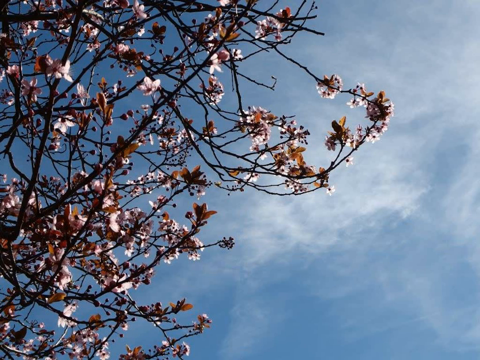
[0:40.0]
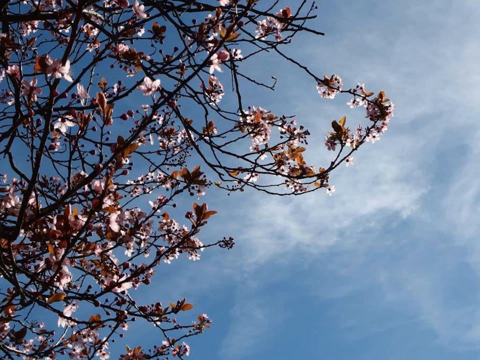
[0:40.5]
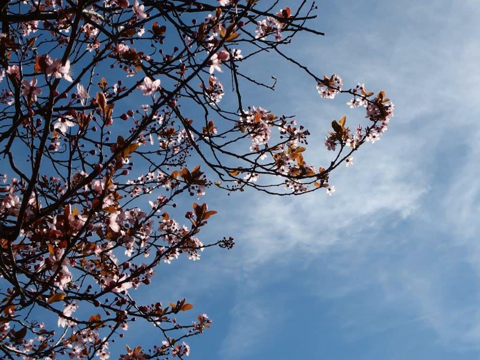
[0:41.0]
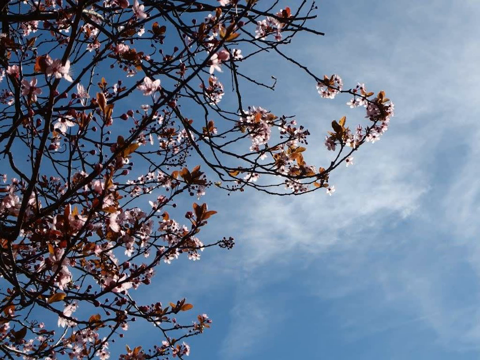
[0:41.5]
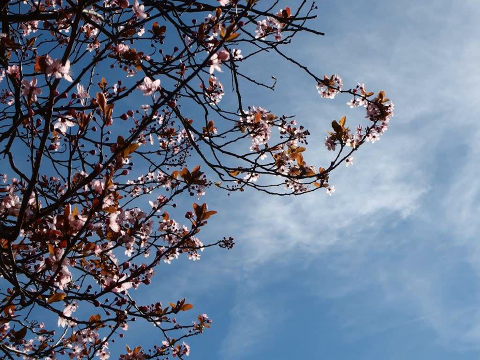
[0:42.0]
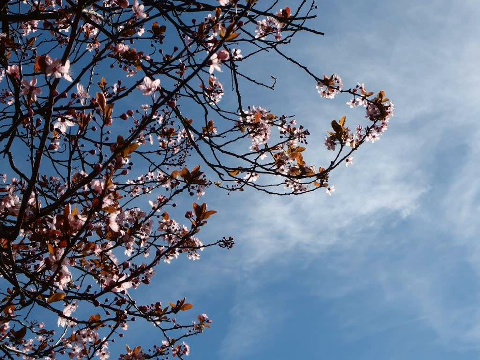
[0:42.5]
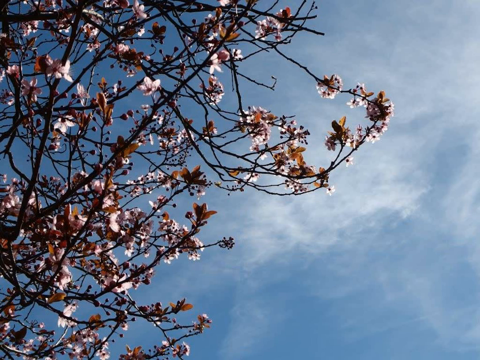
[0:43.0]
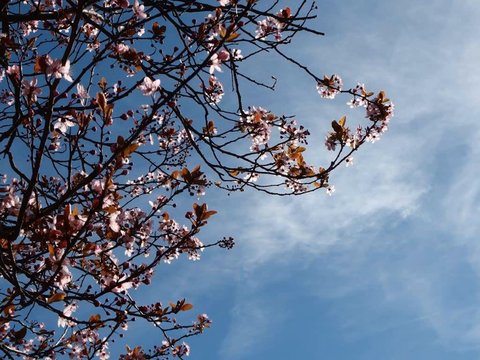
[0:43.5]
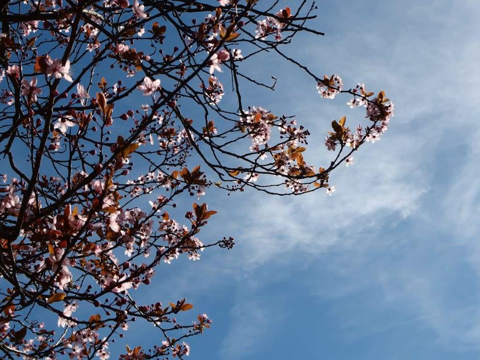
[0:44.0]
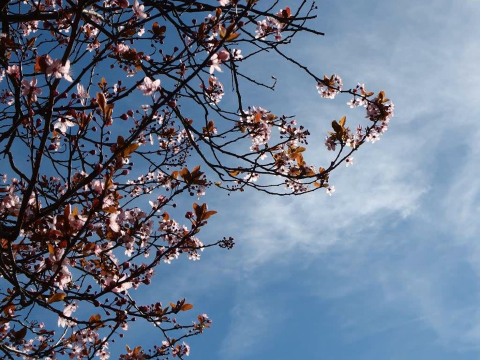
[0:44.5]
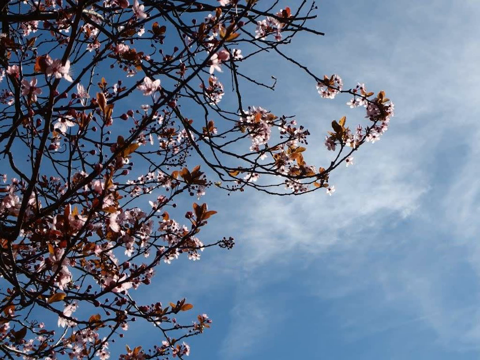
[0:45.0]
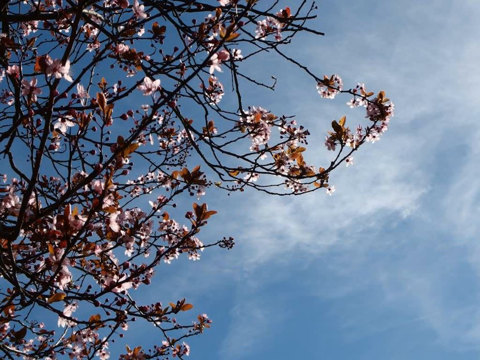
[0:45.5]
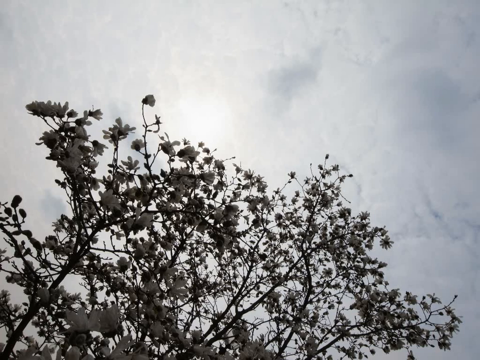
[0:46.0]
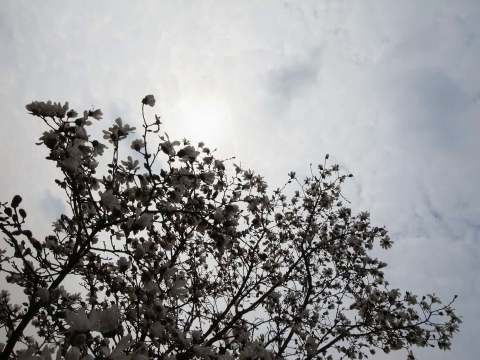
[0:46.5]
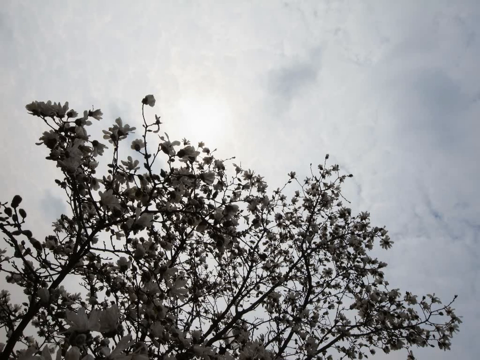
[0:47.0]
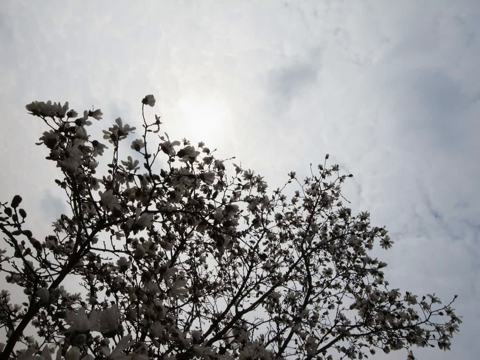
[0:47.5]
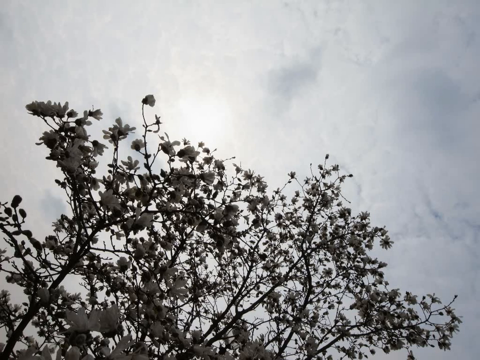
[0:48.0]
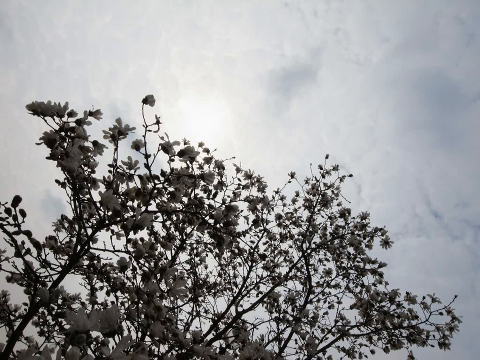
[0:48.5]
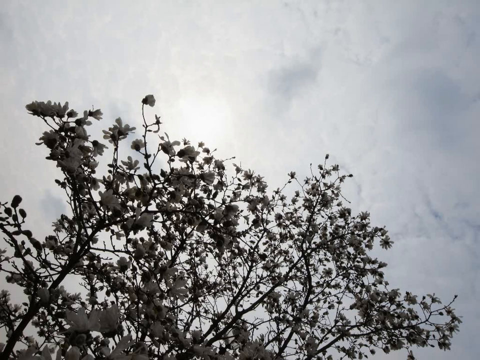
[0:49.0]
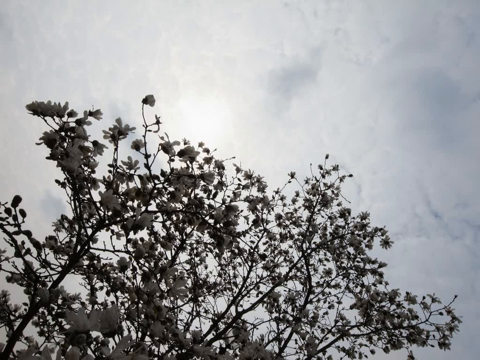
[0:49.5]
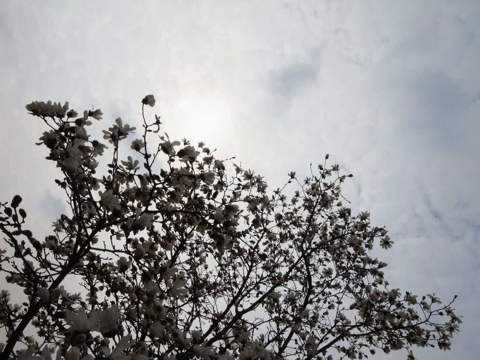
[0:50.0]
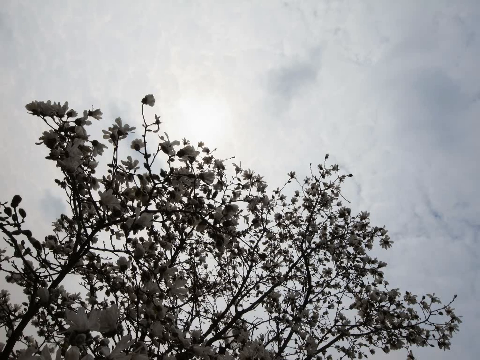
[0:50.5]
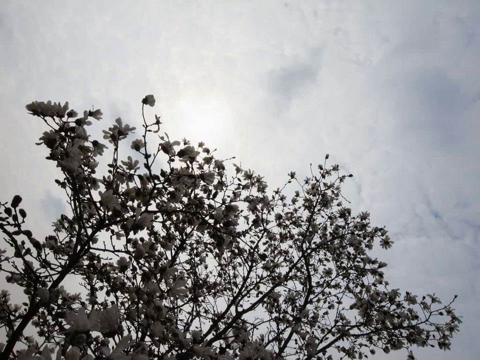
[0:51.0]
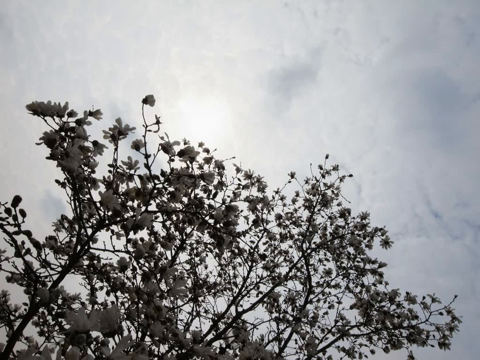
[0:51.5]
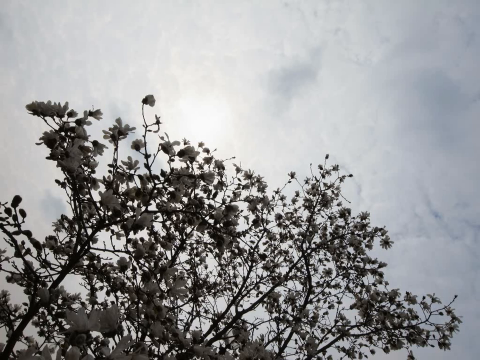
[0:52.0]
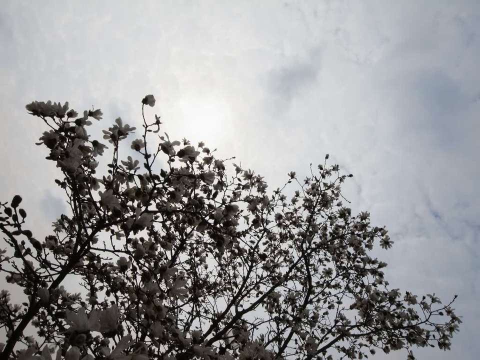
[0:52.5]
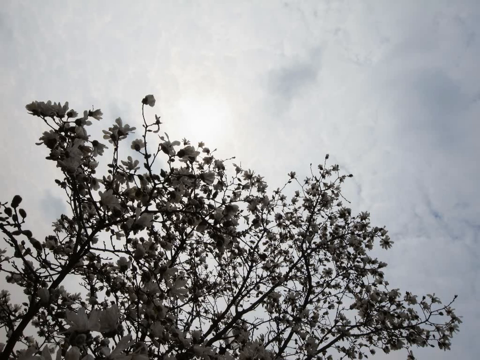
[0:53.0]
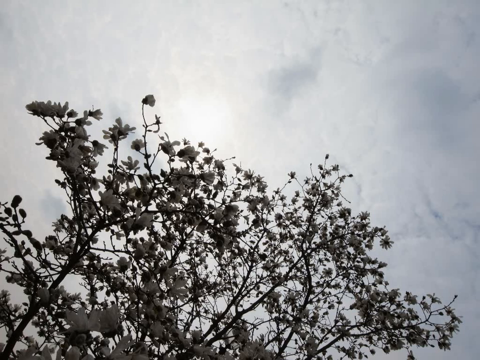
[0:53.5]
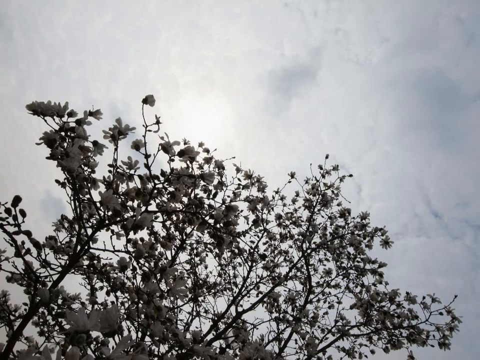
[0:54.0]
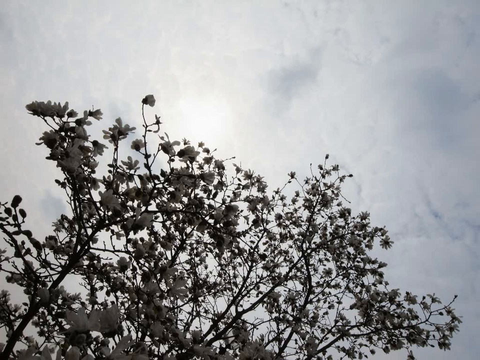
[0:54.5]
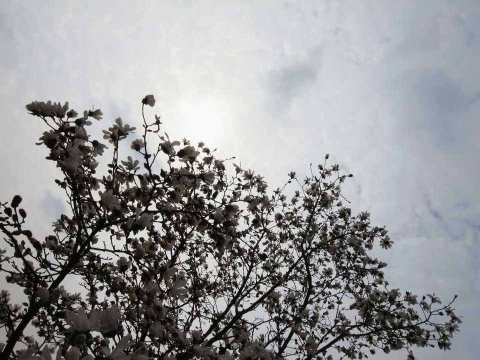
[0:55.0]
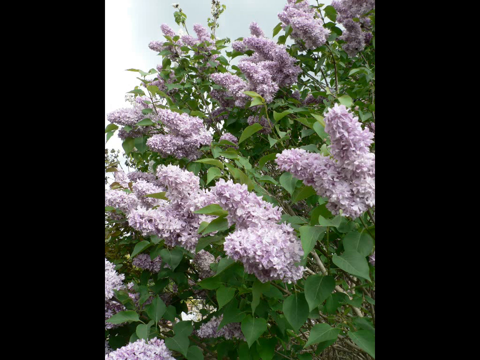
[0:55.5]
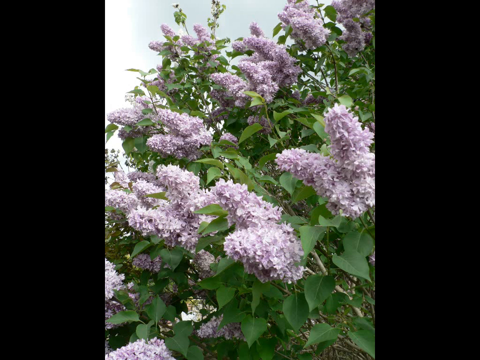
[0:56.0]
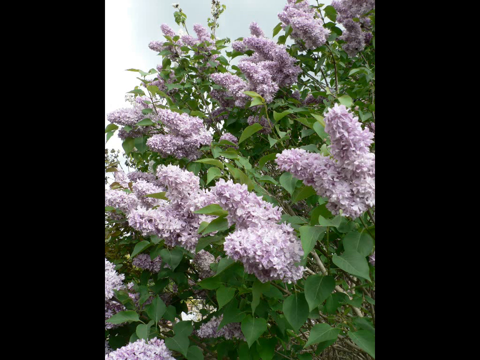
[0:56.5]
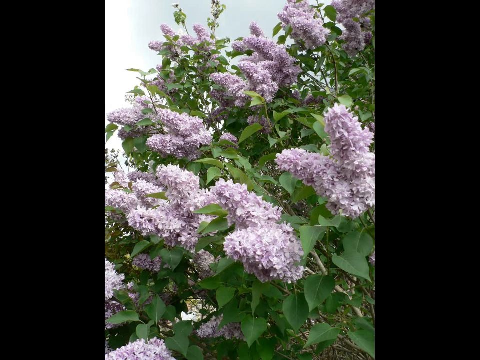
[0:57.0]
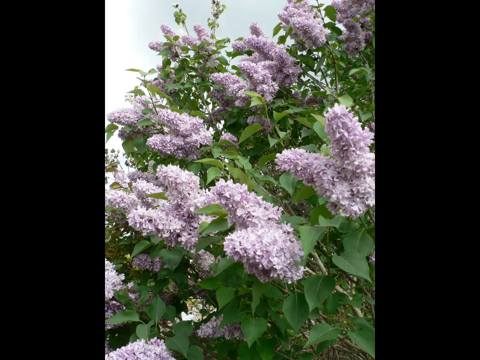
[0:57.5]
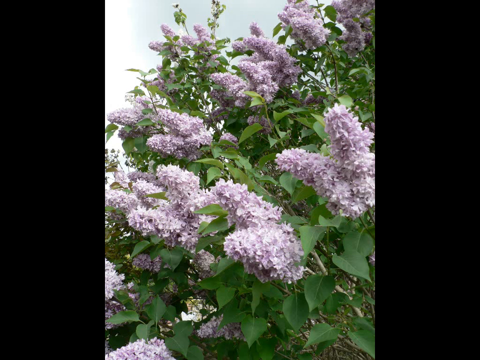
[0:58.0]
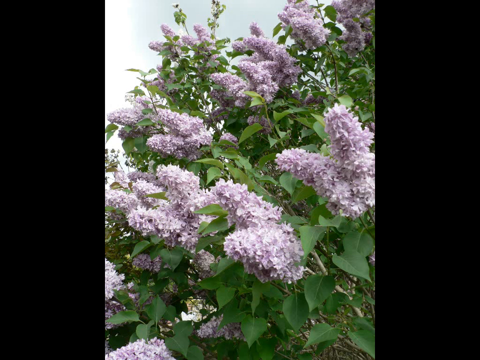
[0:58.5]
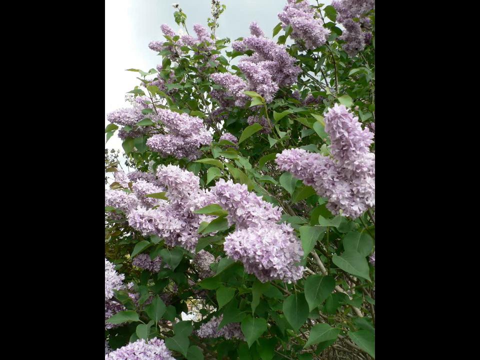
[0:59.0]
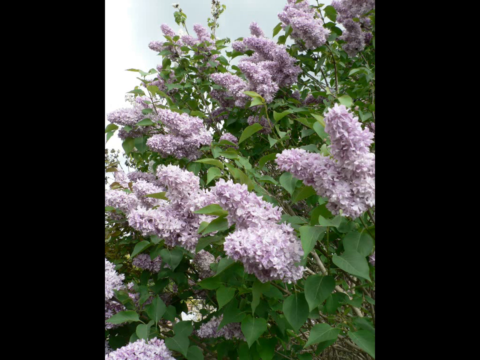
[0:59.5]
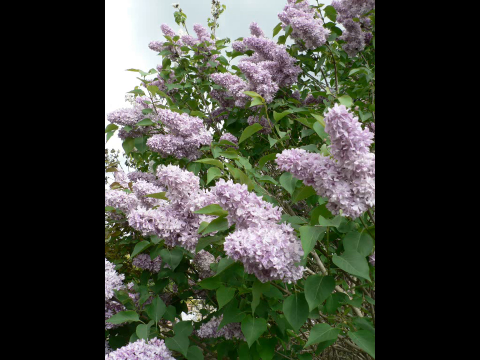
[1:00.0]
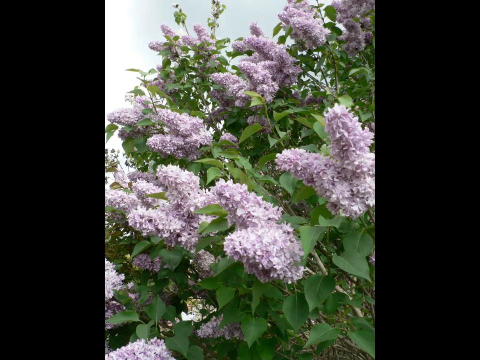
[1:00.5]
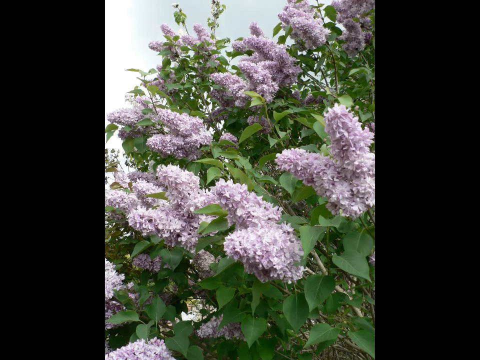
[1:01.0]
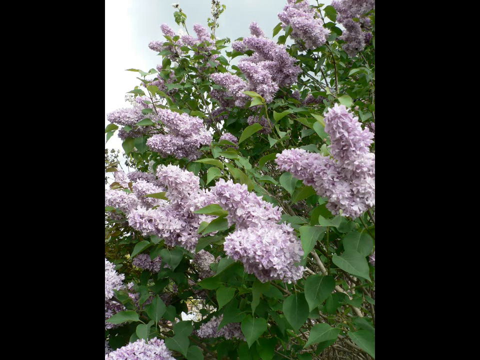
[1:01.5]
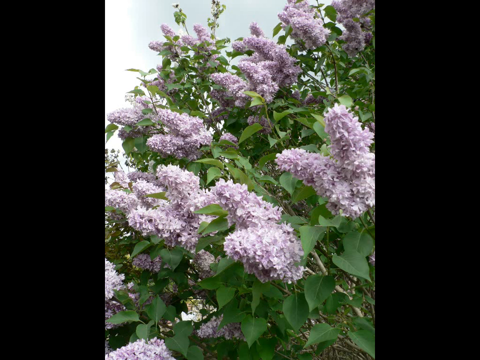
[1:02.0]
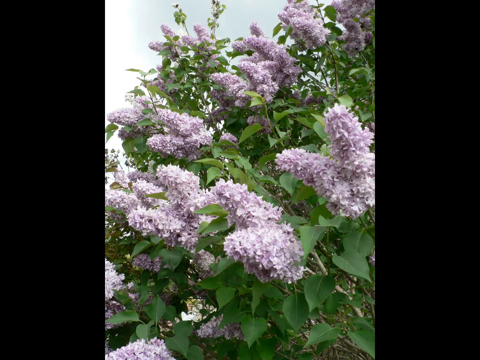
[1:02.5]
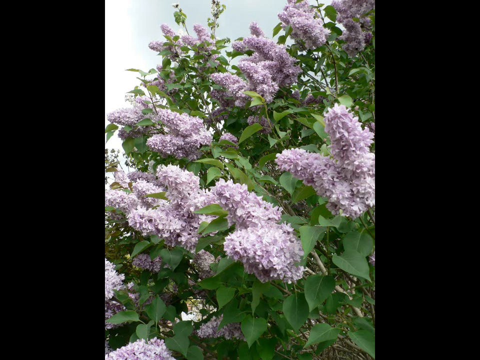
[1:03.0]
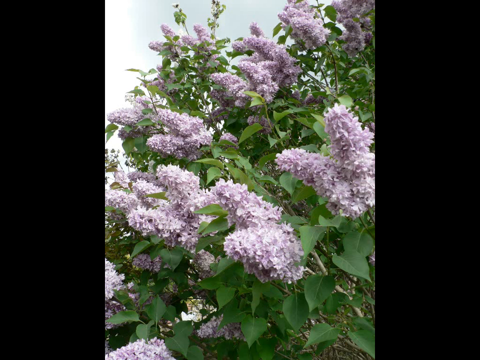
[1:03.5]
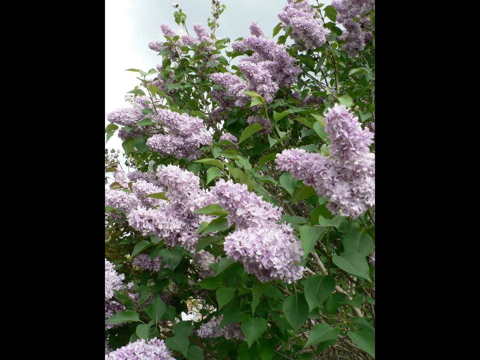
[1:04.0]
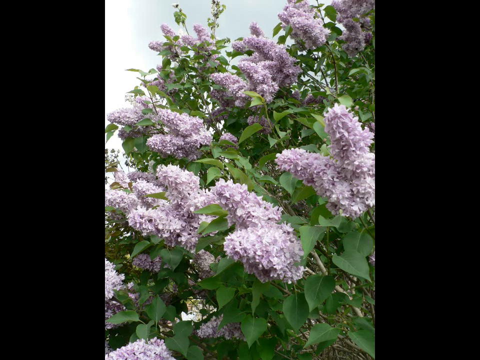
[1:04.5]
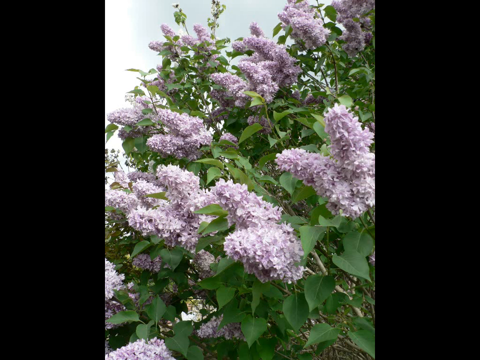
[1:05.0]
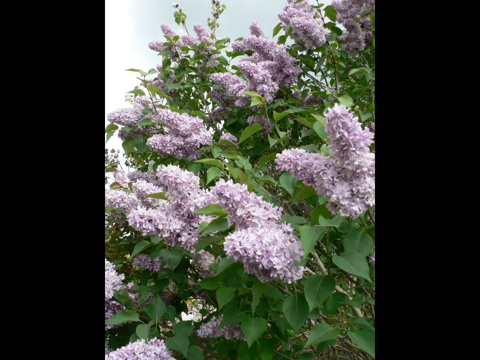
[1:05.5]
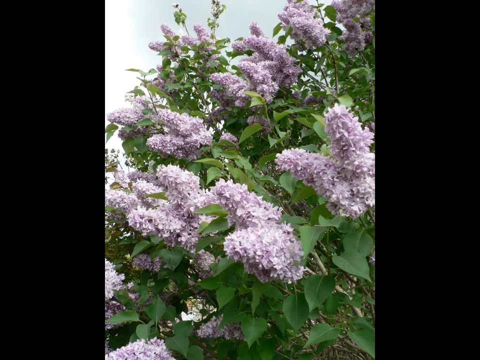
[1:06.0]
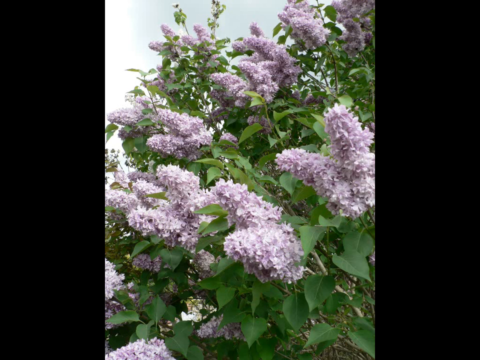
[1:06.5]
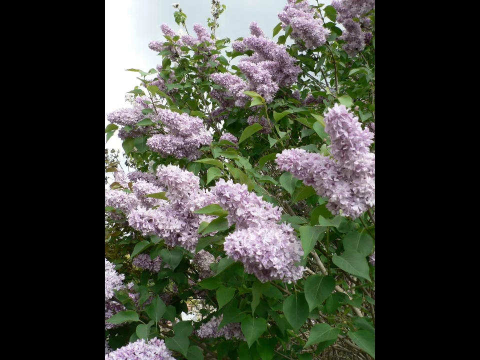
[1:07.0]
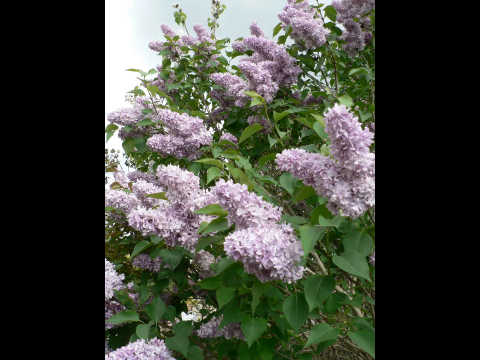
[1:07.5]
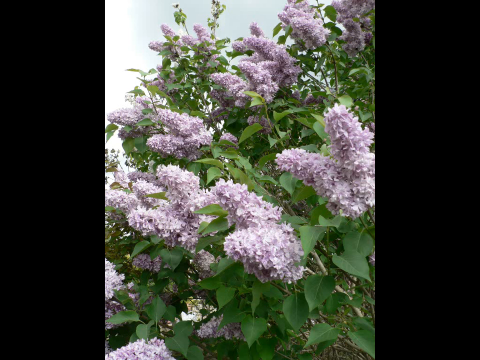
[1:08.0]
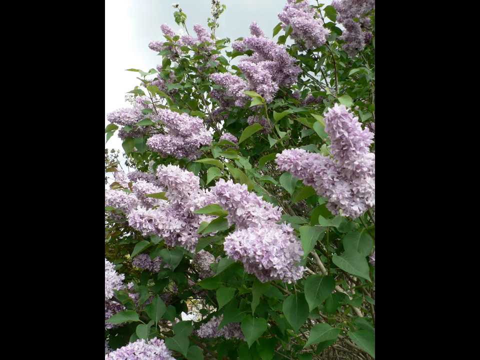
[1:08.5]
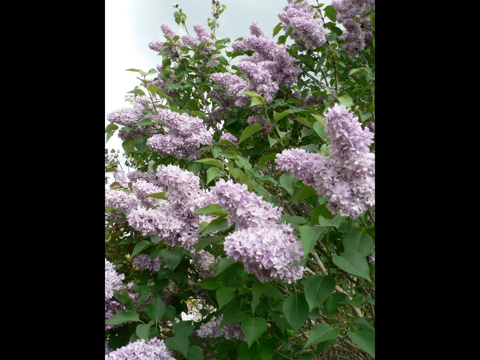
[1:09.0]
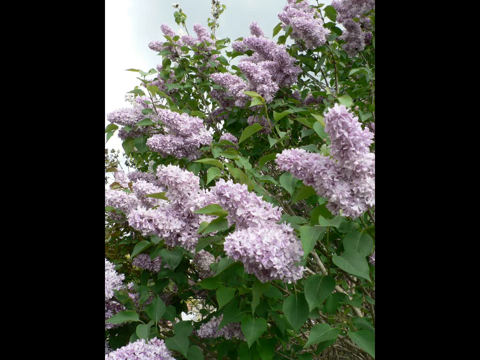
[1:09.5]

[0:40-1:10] The scene of branches coming in from the edge continues; it appears to be the edge of a tree, with the sky in the background. The scene shifts to the top part of a tree covered in flowers on branches. This scene appears almost black and white: the flowers and branches have no color, though the sky in the background seems light blue. The scene then shifts to an up-close view of long, light purple flowers that look very soft, spread throughout a whole bunch of green leaves, with the sky visible in the upper left area.